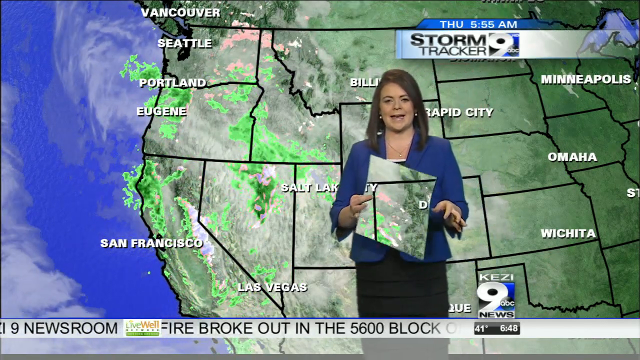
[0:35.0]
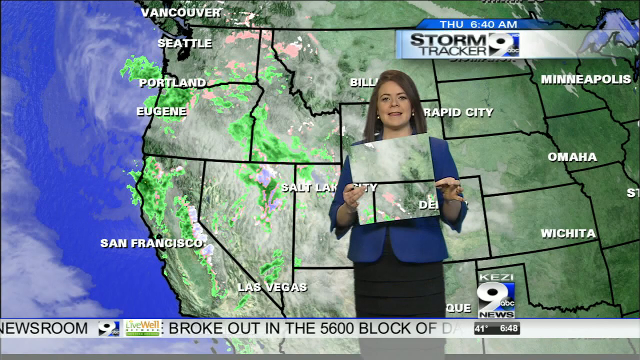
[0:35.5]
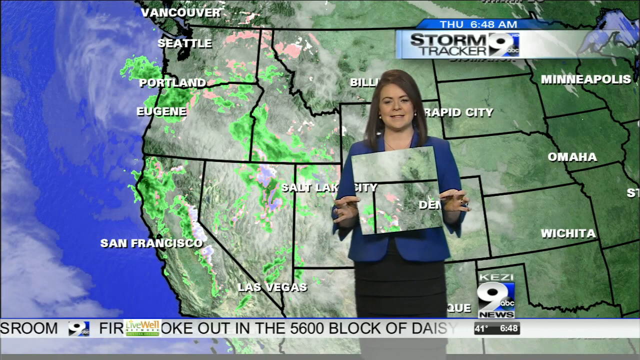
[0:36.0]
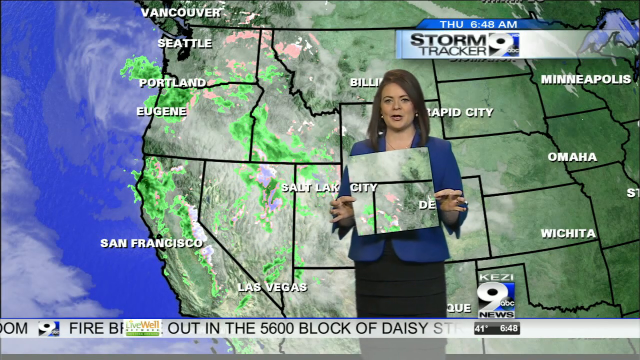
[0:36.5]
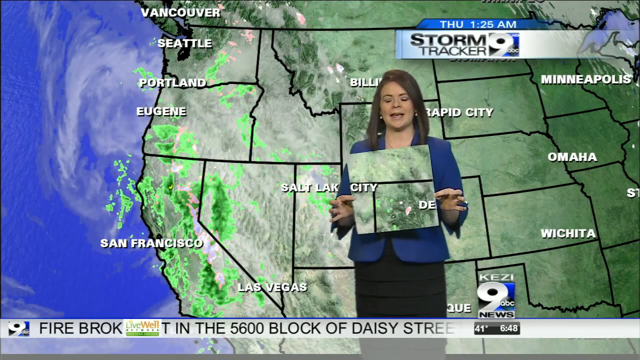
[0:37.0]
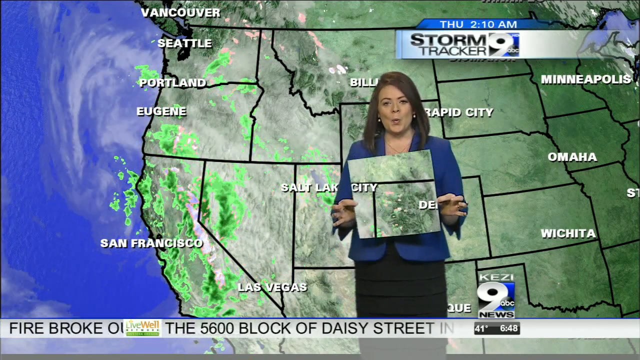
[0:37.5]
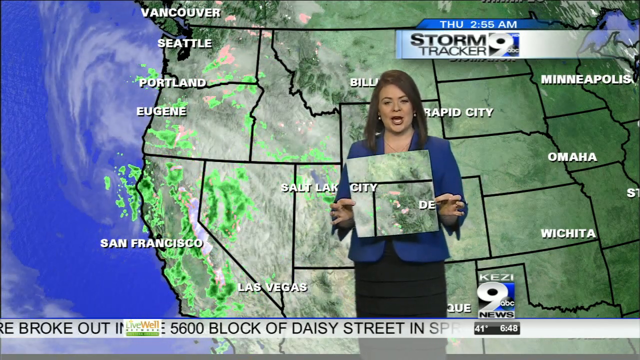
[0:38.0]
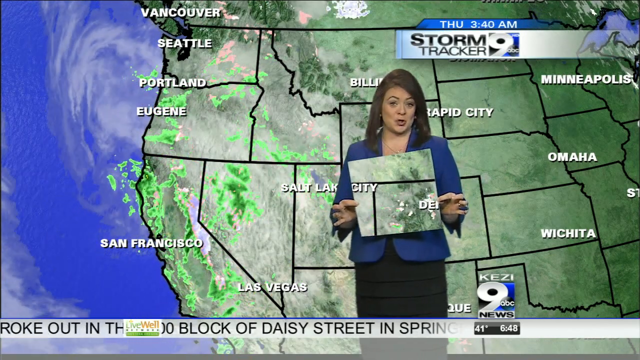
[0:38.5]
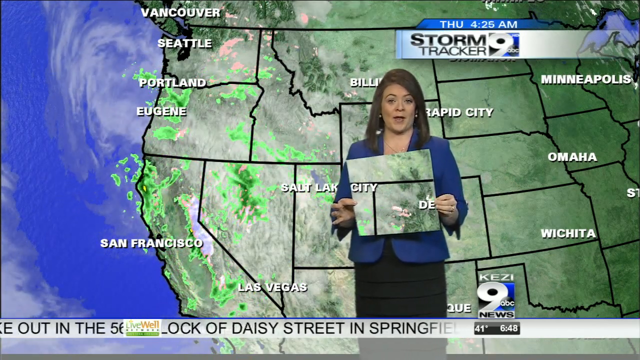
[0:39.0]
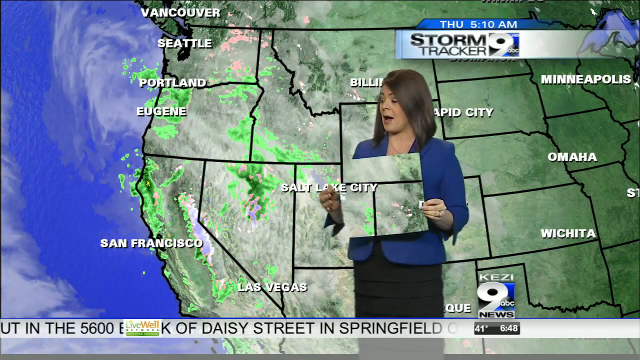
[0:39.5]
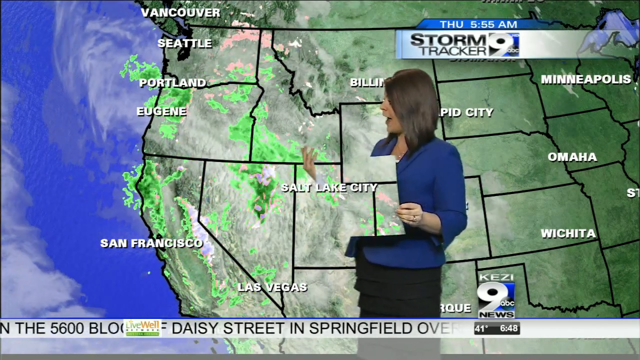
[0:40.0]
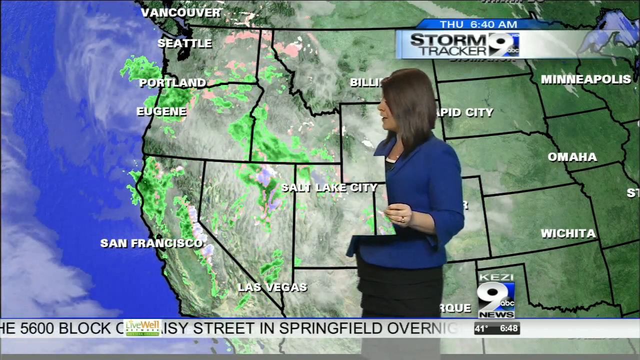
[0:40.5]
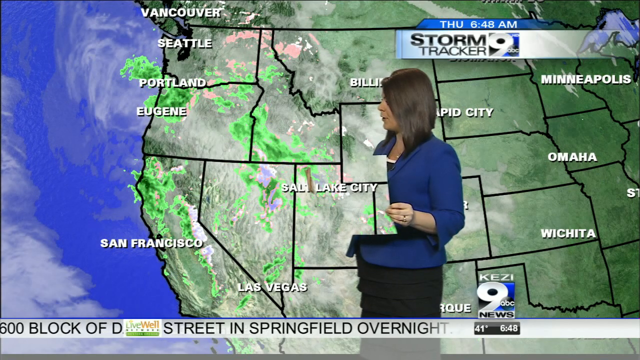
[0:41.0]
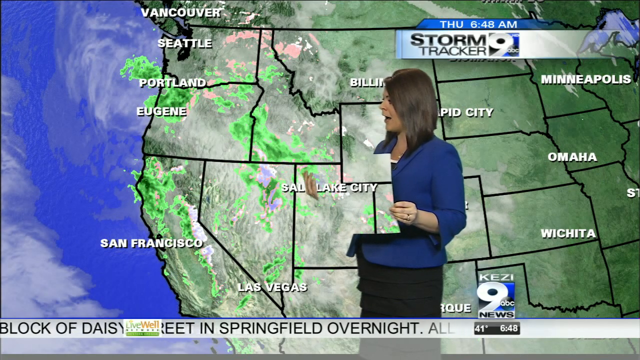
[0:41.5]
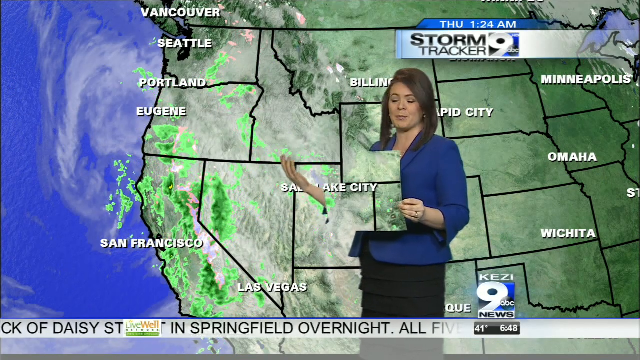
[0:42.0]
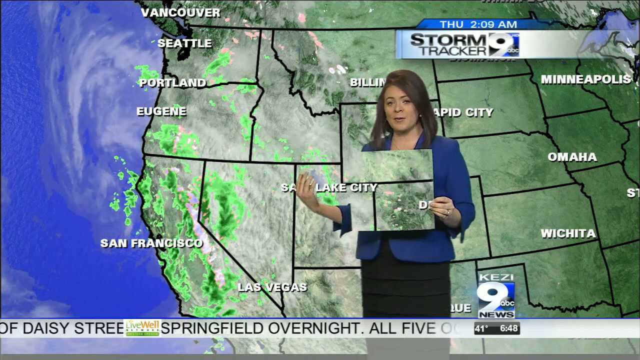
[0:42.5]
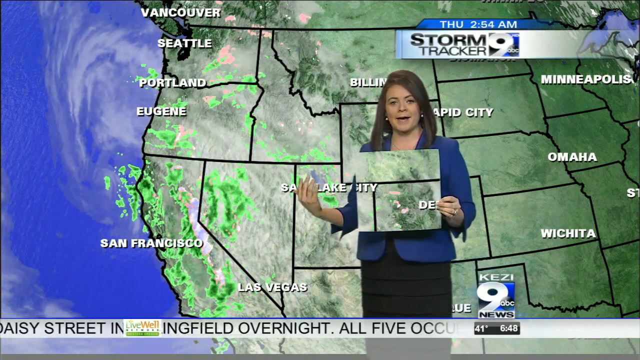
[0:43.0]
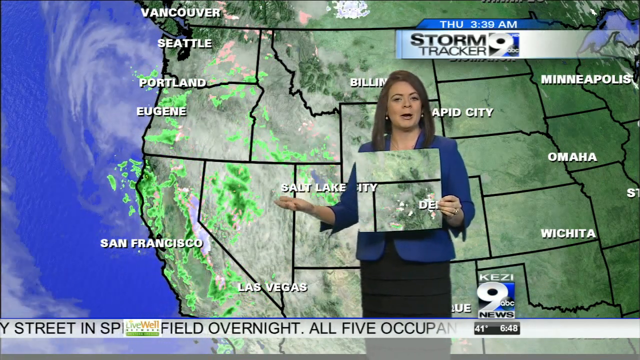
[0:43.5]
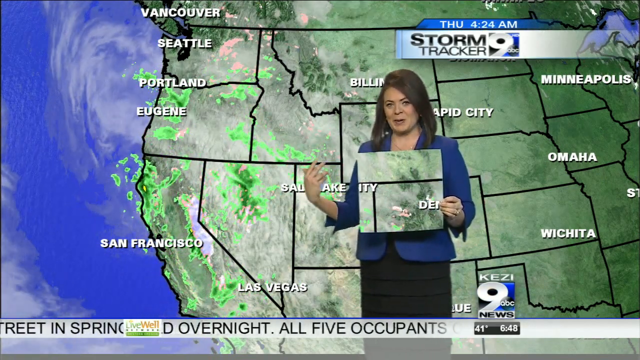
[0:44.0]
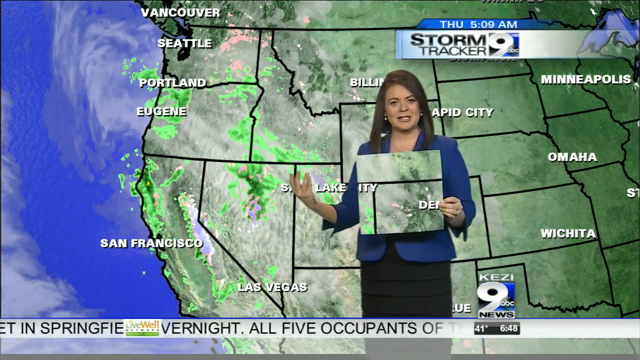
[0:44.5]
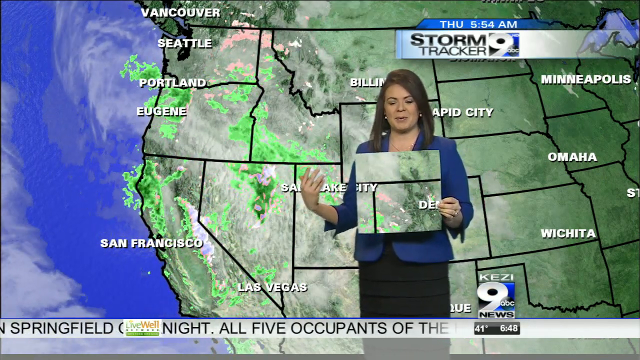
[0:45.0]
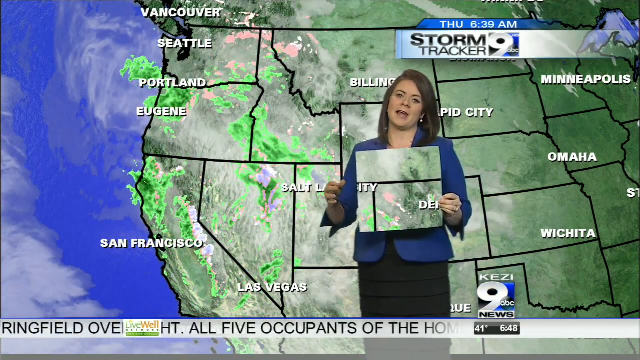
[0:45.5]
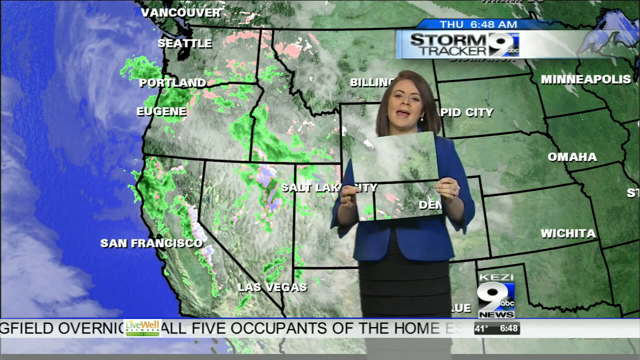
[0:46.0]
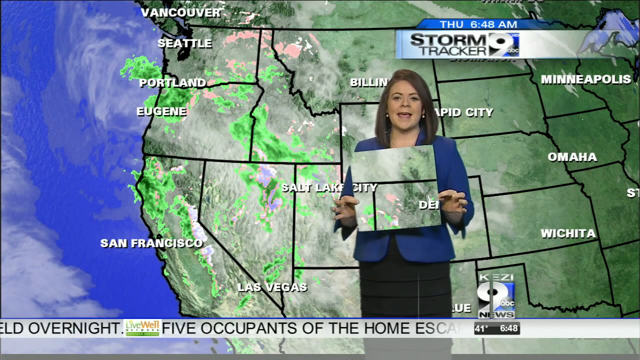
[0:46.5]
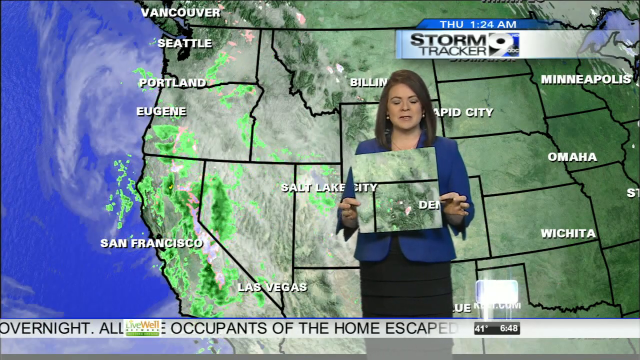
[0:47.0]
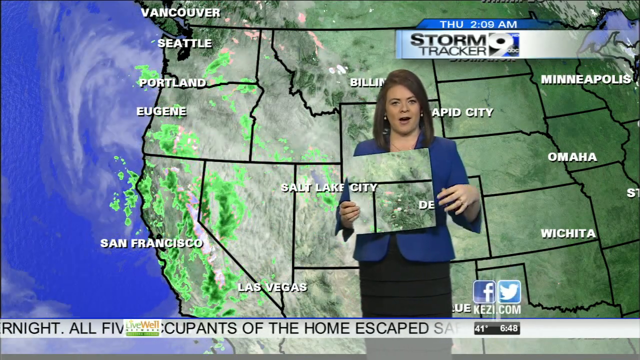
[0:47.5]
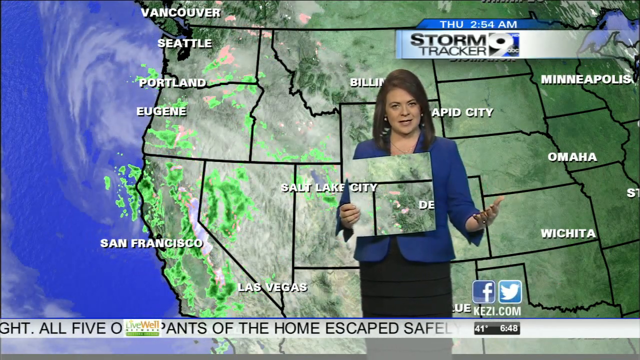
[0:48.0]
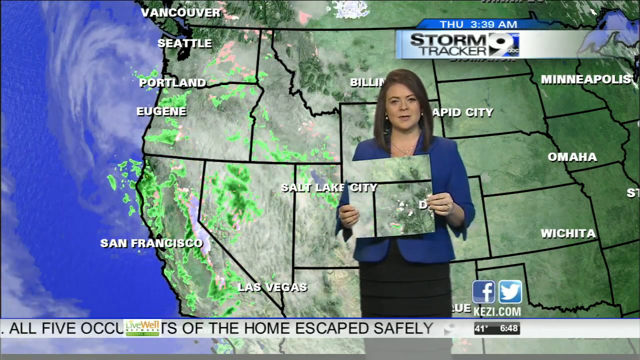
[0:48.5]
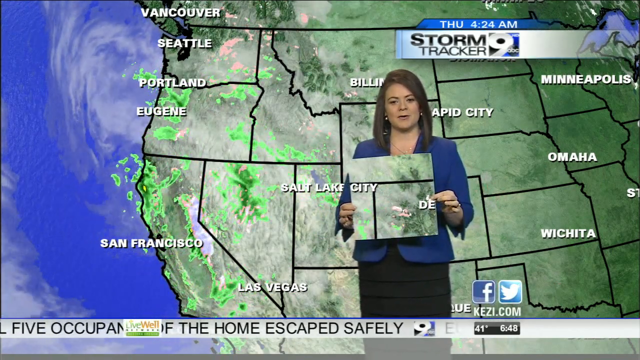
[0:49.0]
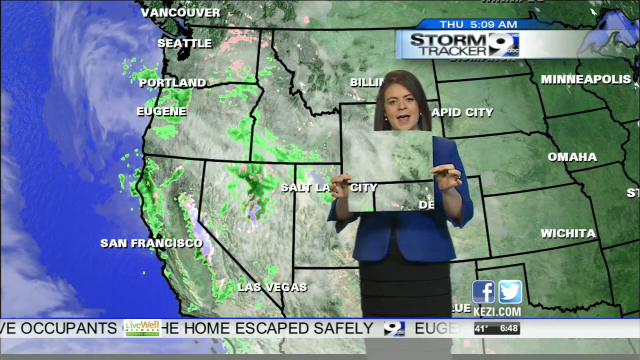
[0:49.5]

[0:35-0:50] A female meteorologist stands in a news studio beside a weather system that is being tracked, perhaps a potential storm. She has dark brown hair and wears a dark blue suit jacket top with a black dress underneath. As she talks, she makes hand motions and gestures. She holds up a square in front of her, and it is impossible to tell what the square is because it picks up the green screen: where she holds it in front of herself, only the map from the background shows. Off to her side, the map reads "Salt Lake" for Salt Lake City, and when she holds the panel in front of her, the word "city" appears overlaid on top of her. News feed information, including the date and time, scrolls across the bottom of the screen. The background is a typical weather map of the United States, with various cities marked prominently in white text and multicolored coloring for precipitation and storm intensity moving across it as the storm moves.